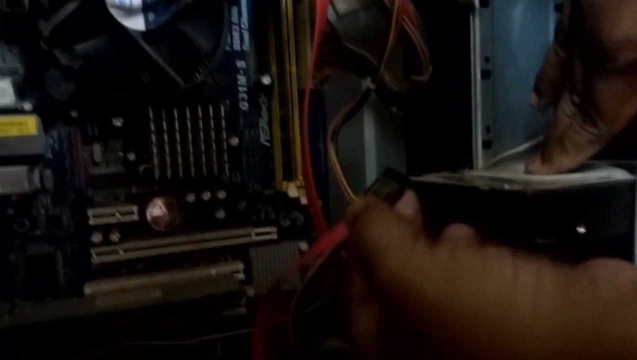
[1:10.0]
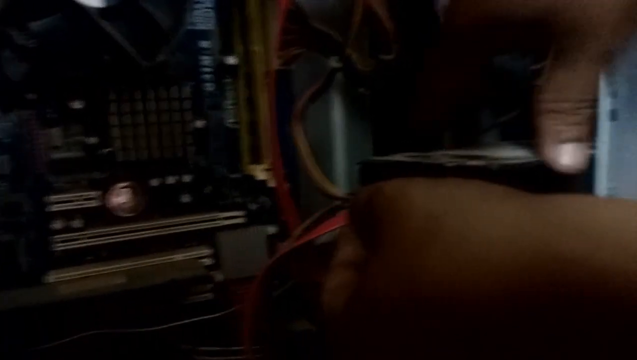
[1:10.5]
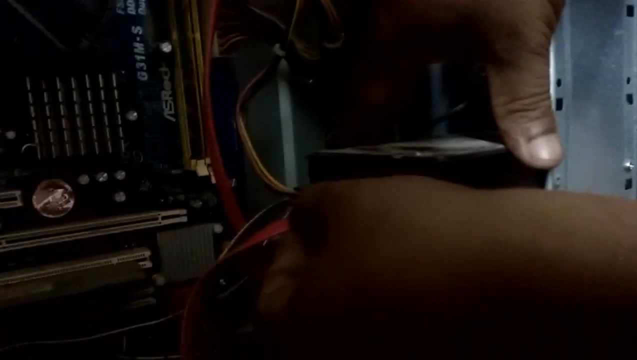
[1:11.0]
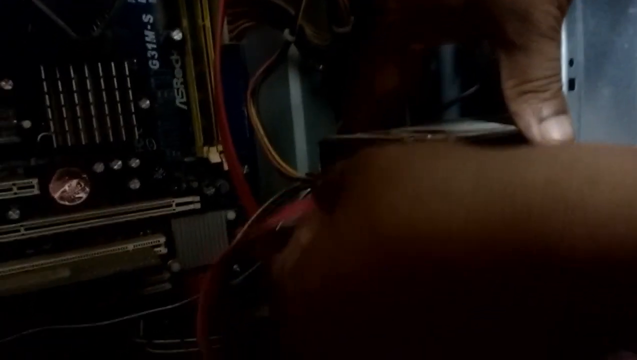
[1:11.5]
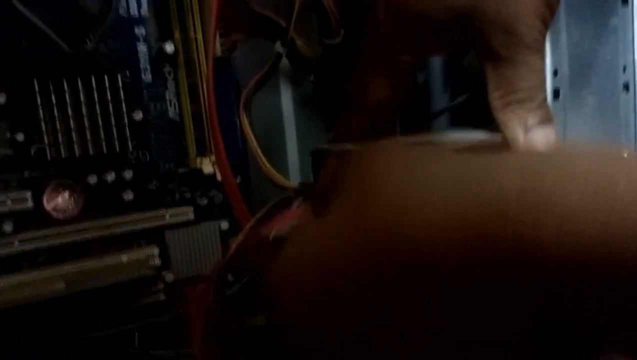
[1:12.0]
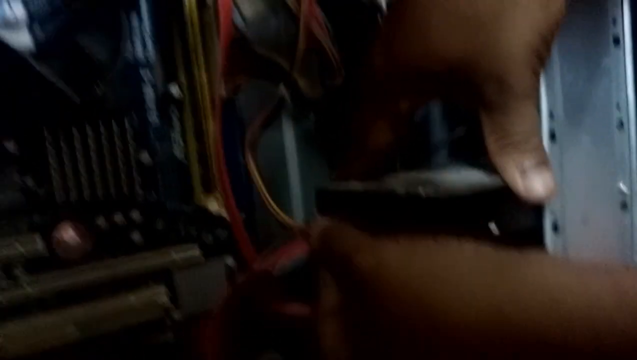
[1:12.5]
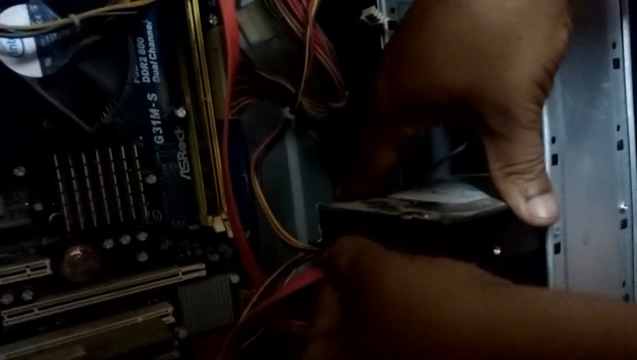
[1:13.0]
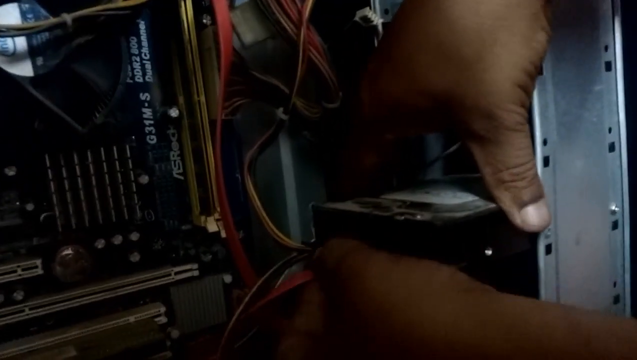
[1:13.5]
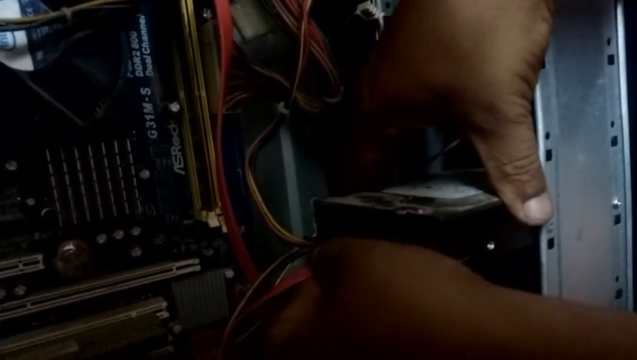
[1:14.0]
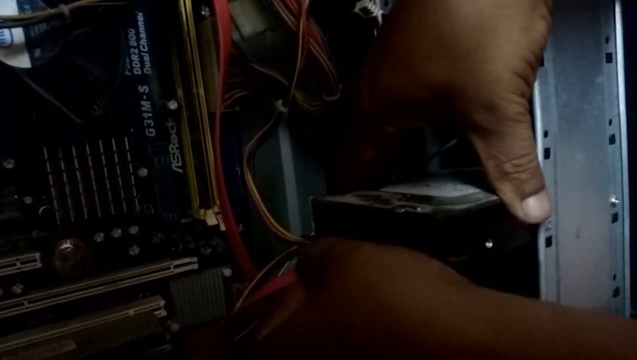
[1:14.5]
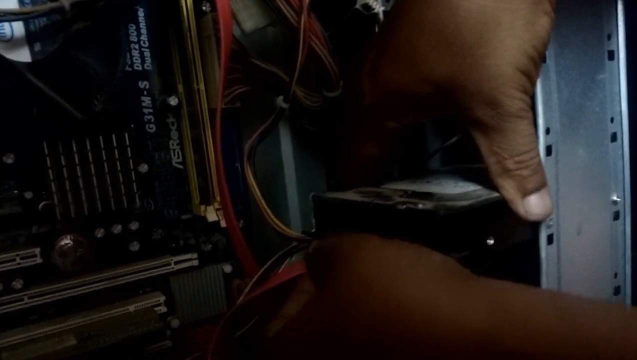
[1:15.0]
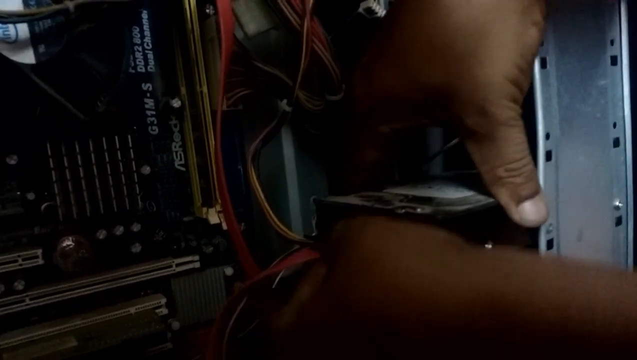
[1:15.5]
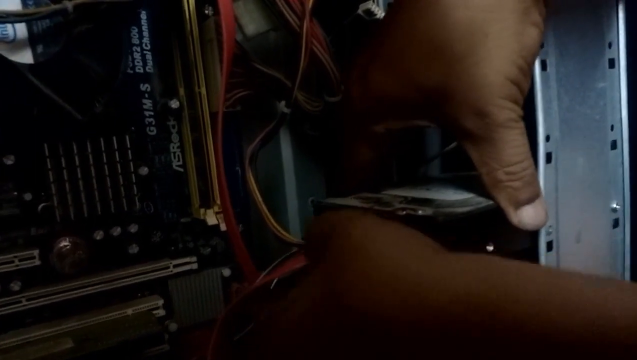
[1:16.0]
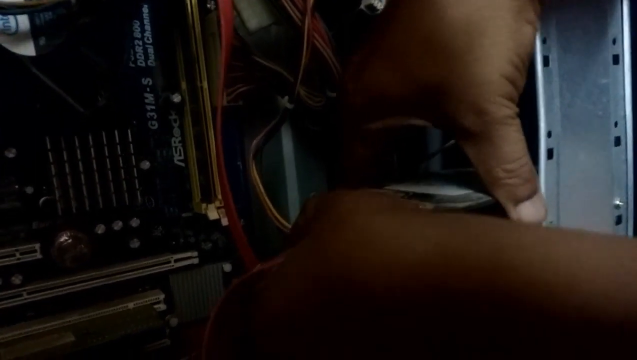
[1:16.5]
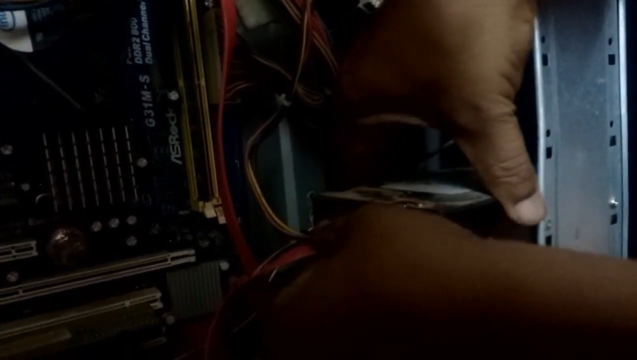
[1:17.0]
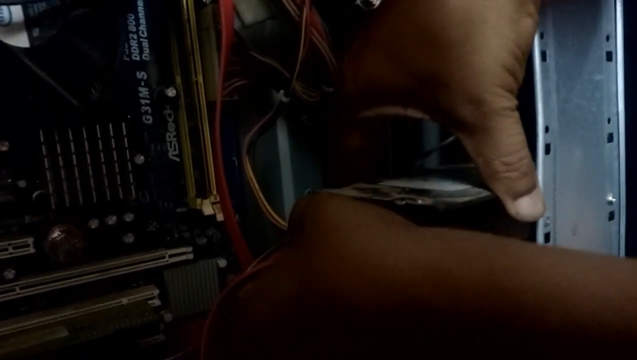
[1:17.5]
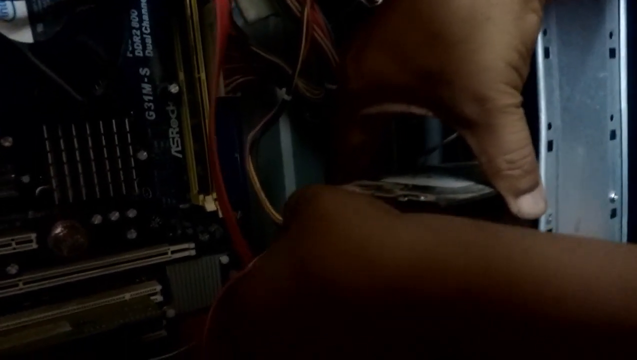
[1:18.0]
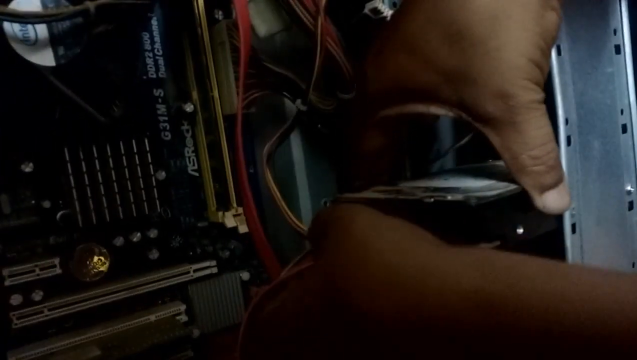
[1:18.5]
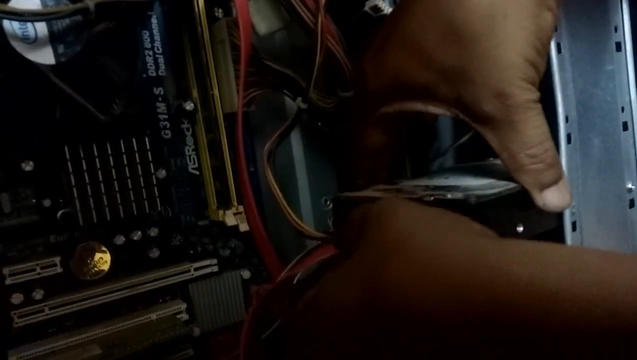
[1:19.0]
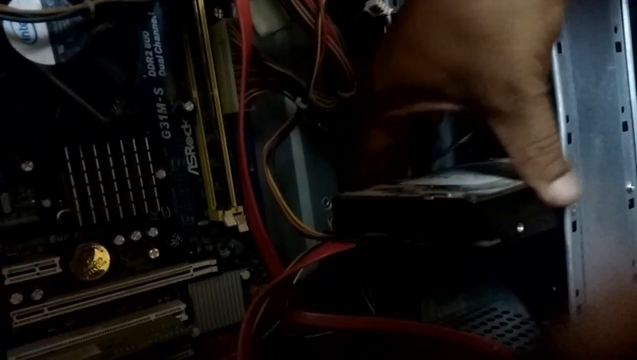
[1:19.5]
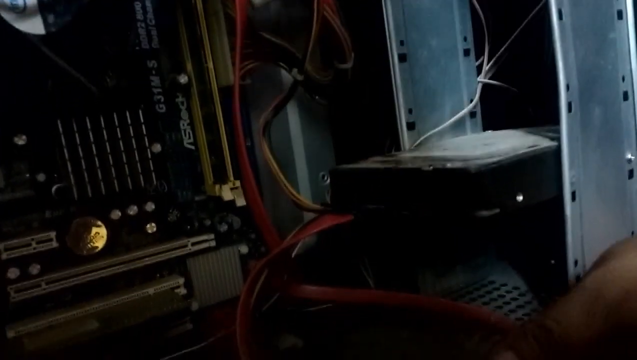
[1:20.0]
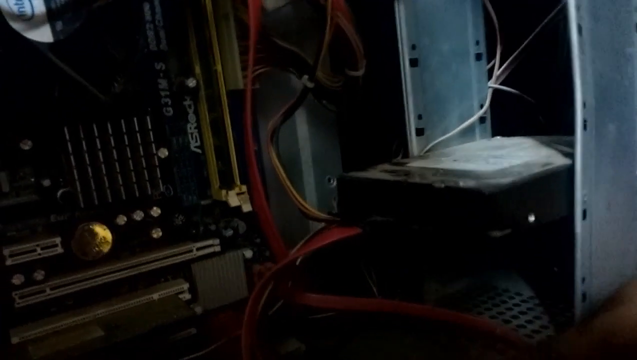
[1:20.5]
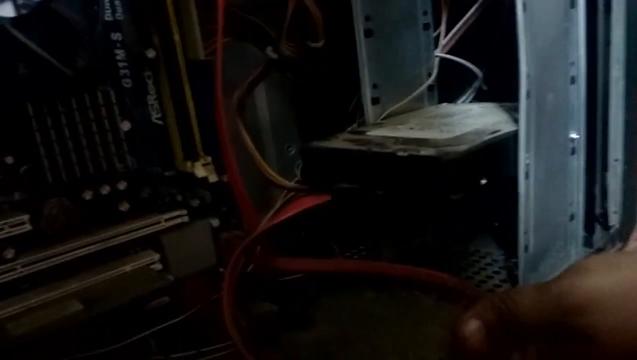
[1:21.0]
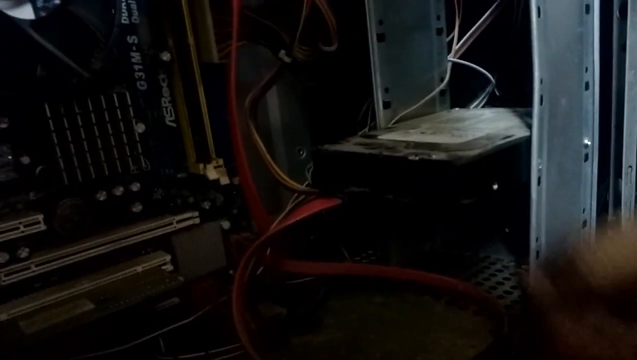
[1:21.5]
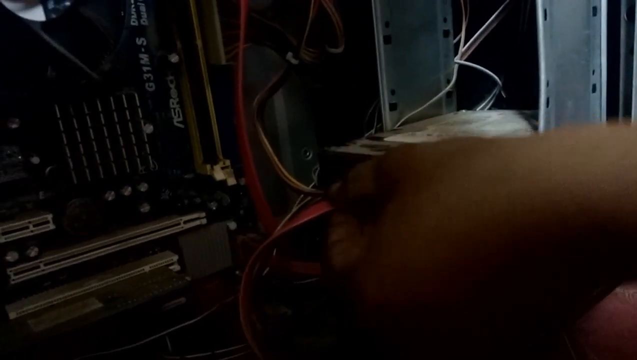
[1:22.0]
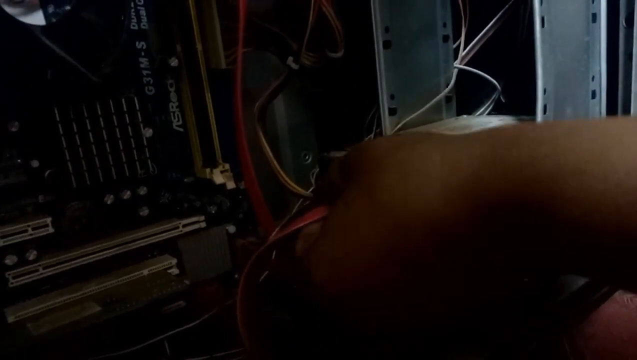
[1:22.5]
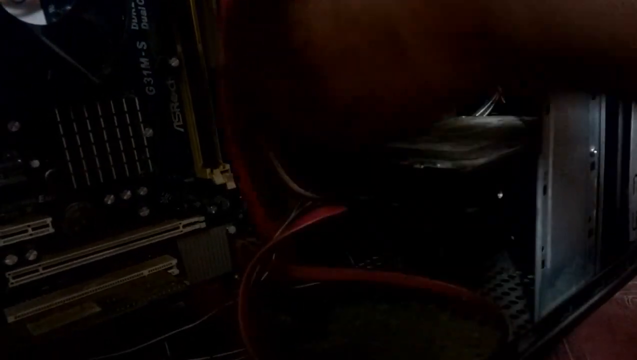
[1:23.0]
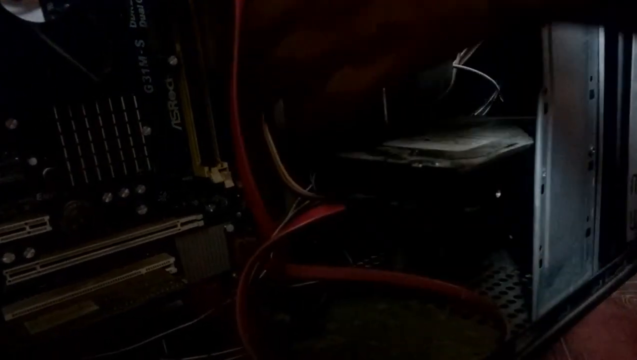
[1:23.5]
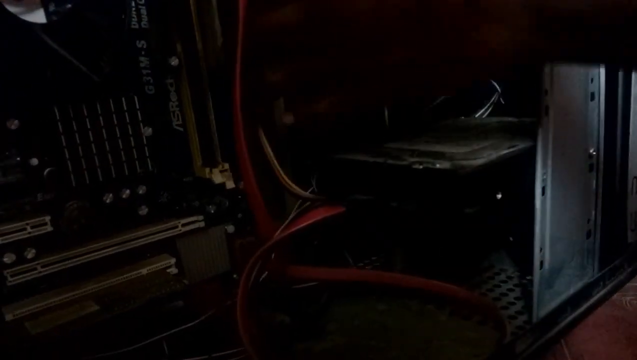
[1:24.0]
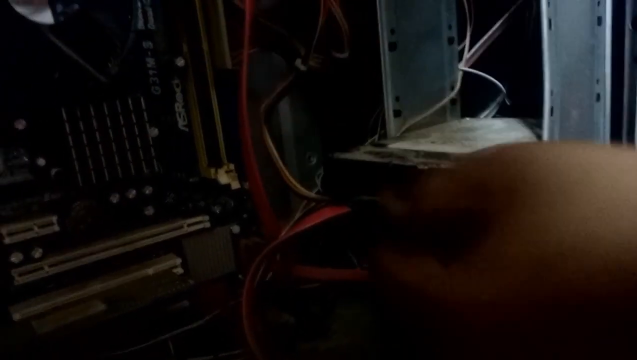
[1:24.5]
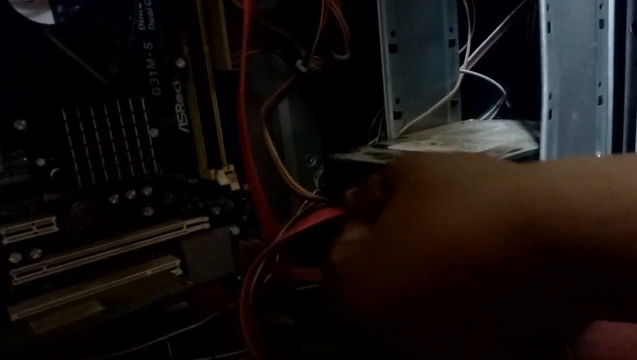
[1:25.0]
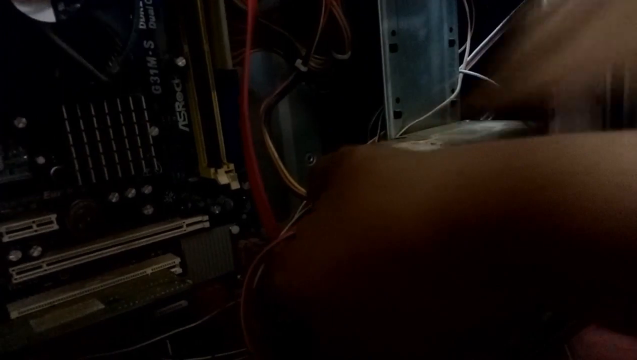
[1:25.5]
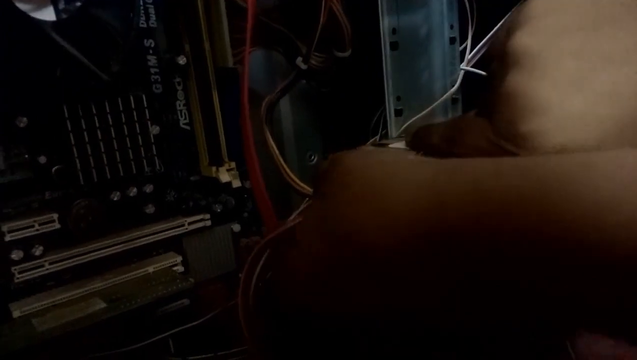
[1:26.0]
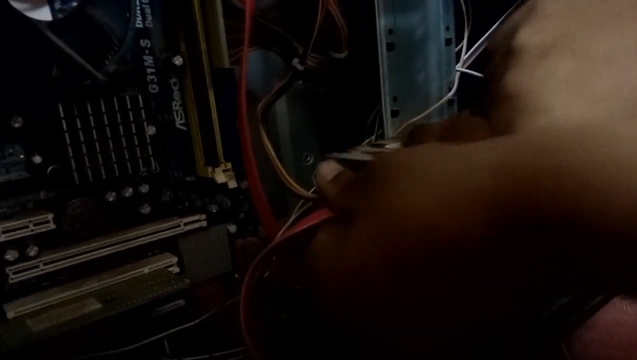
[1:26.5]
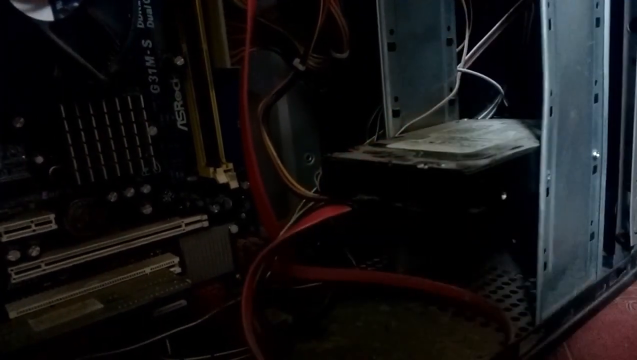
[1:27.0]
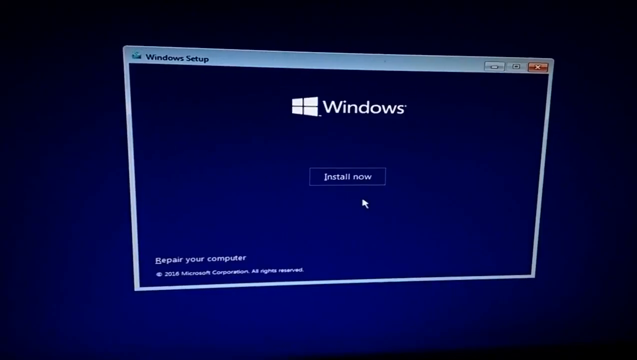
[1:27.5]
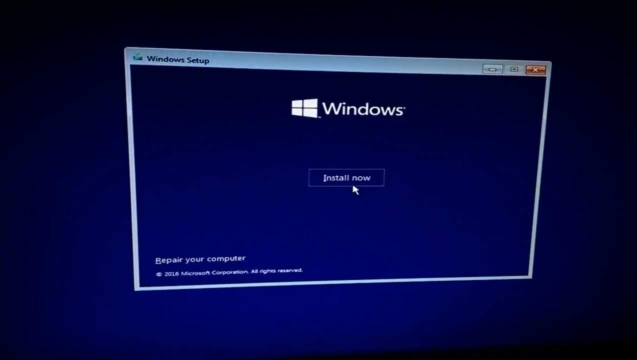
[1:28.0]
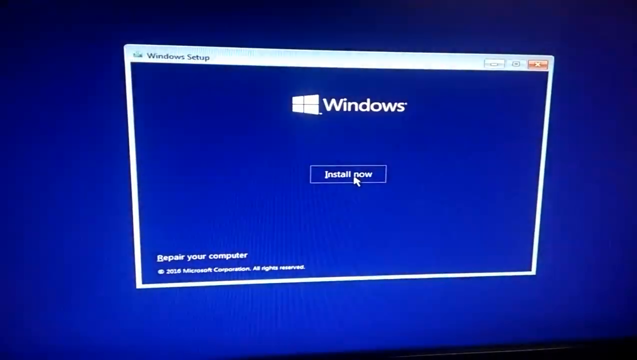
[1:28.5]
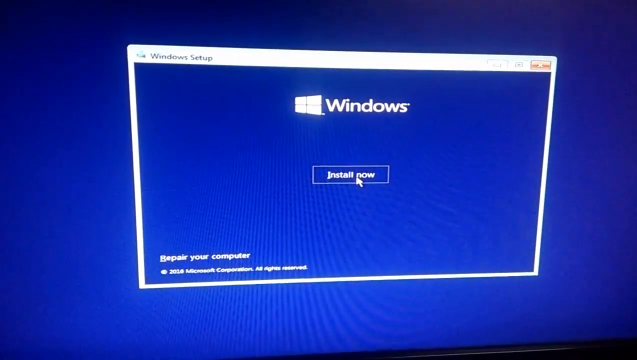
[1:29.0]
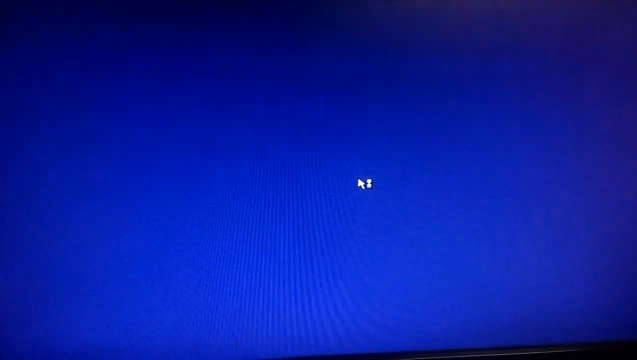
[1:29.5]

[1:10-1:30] The view changes to a man plugging something into a PC tower; it looks like an HDD. He struggles a bit to get it plugged in but then appears to get it connected. The screen then returns to the initial Windows install window with the dark blue background and the option to install Windows.